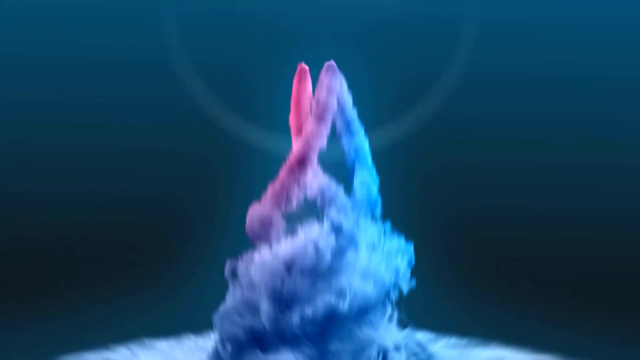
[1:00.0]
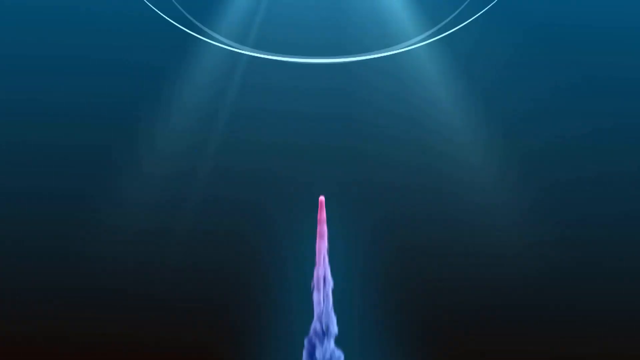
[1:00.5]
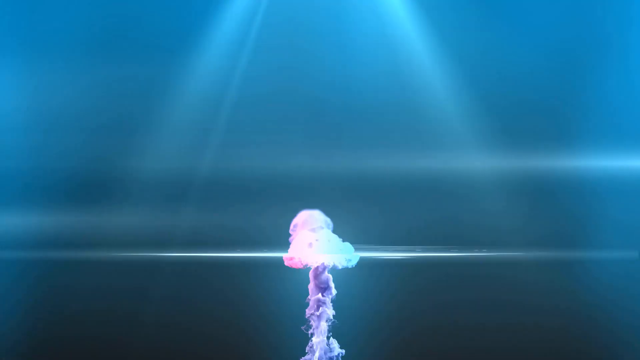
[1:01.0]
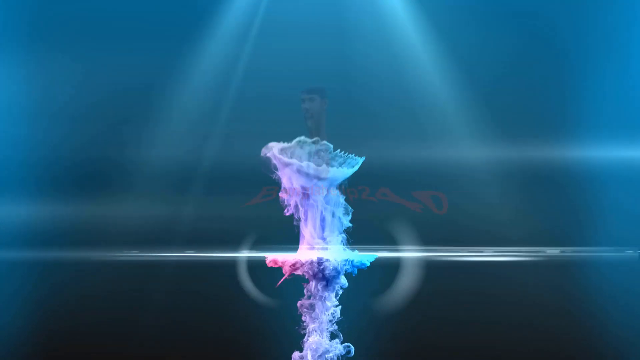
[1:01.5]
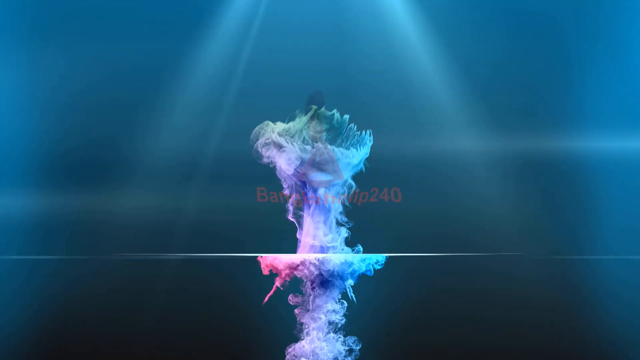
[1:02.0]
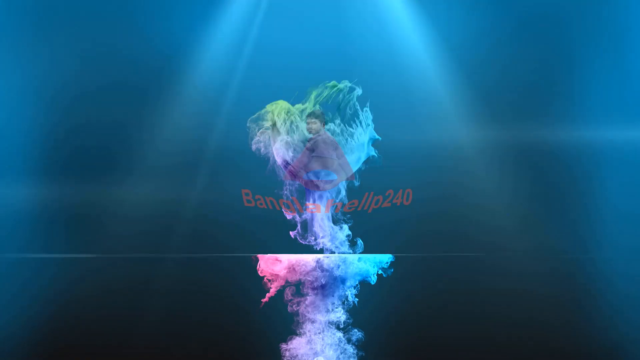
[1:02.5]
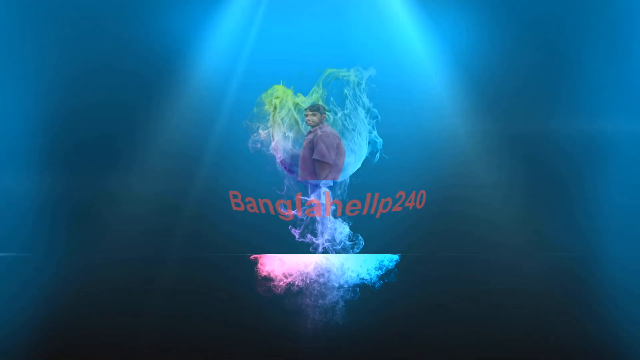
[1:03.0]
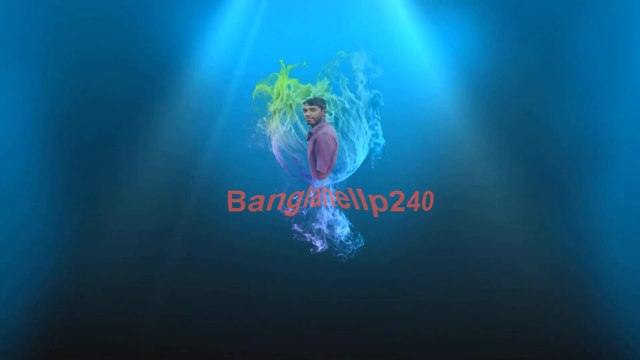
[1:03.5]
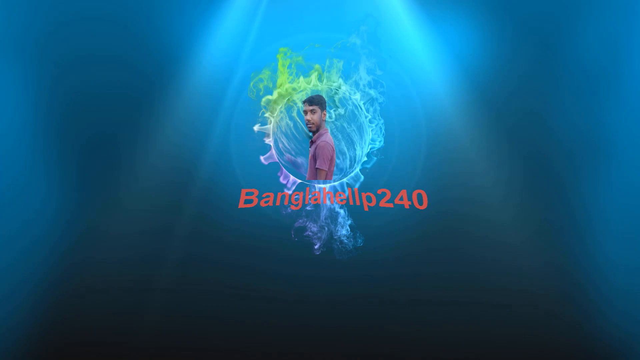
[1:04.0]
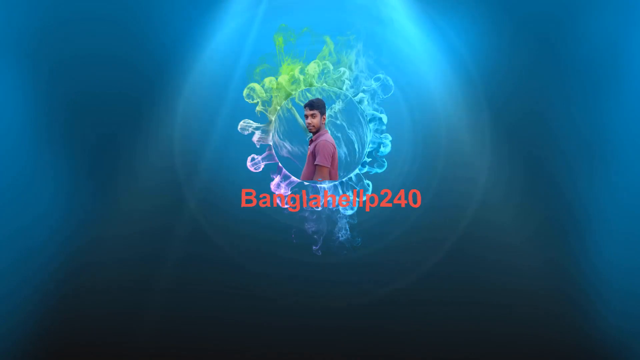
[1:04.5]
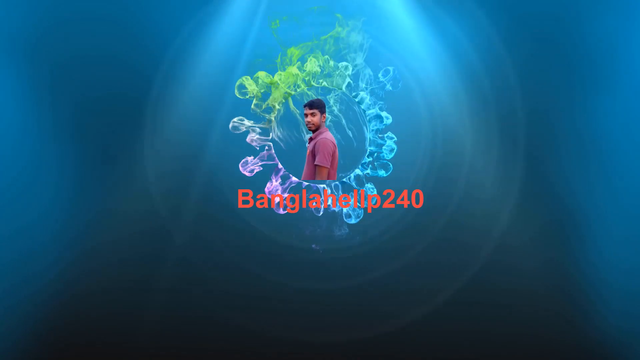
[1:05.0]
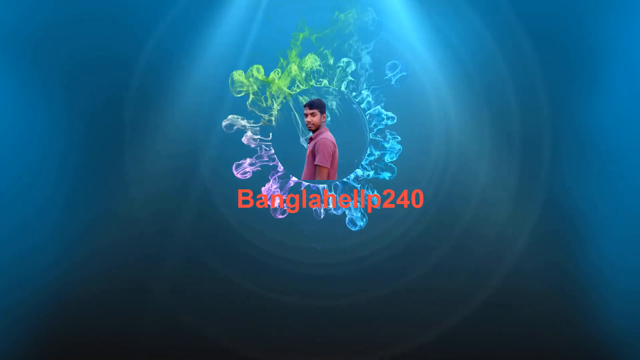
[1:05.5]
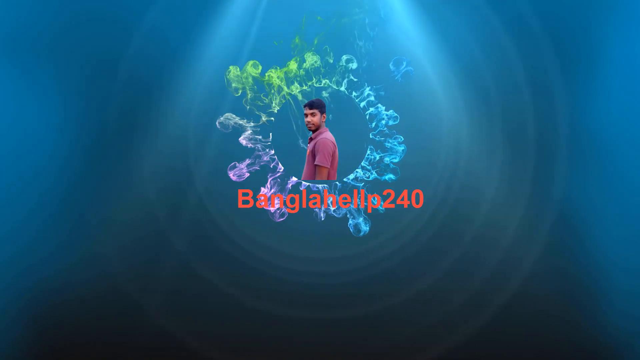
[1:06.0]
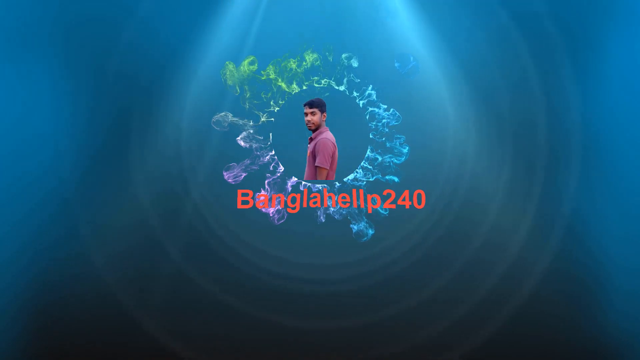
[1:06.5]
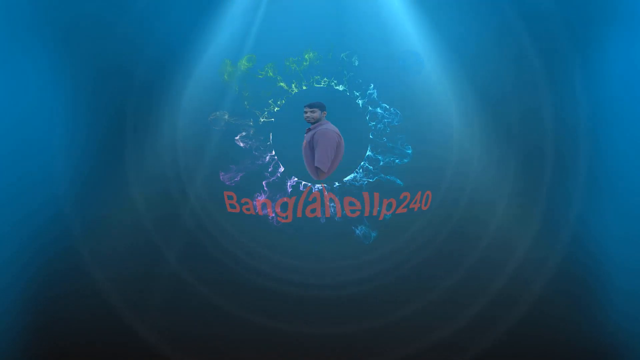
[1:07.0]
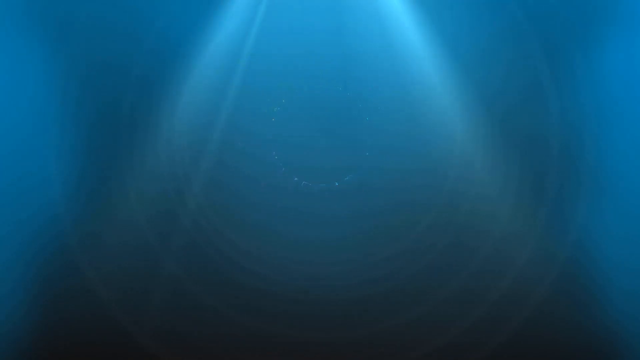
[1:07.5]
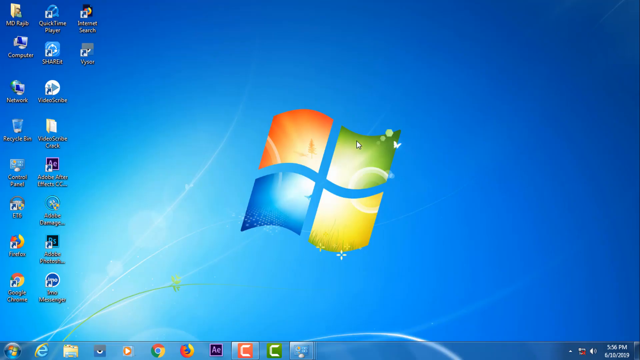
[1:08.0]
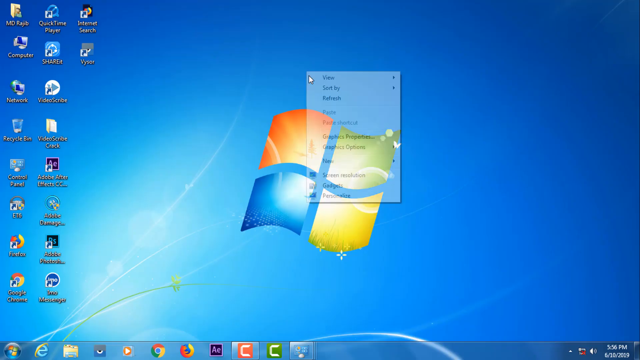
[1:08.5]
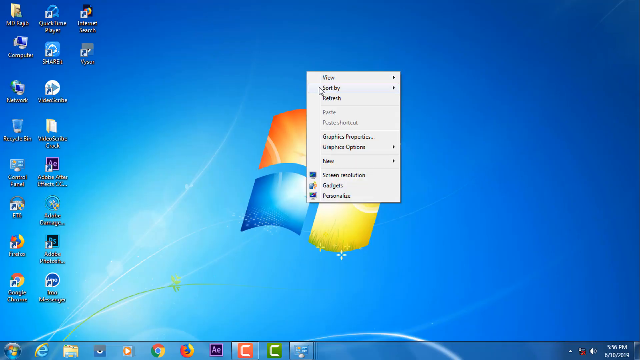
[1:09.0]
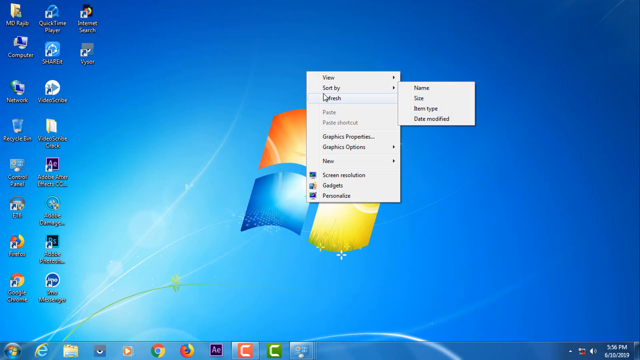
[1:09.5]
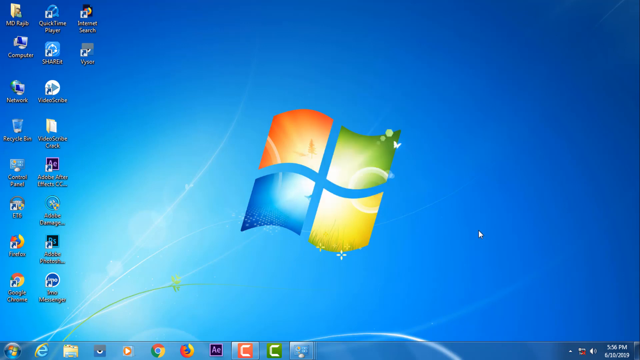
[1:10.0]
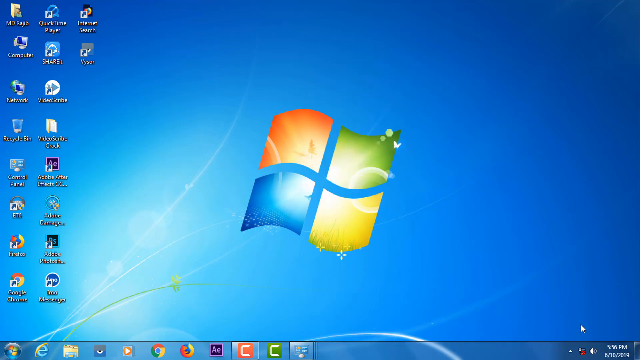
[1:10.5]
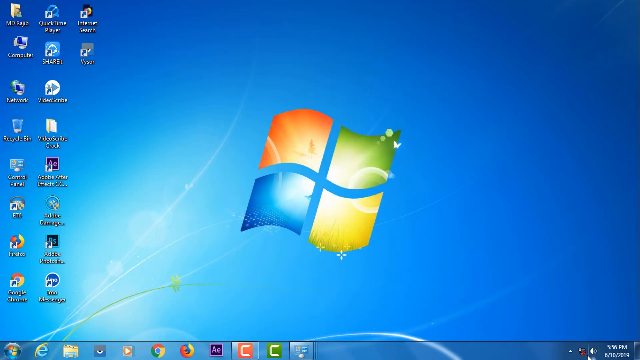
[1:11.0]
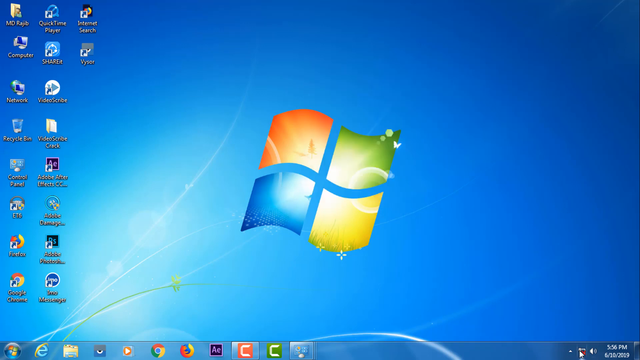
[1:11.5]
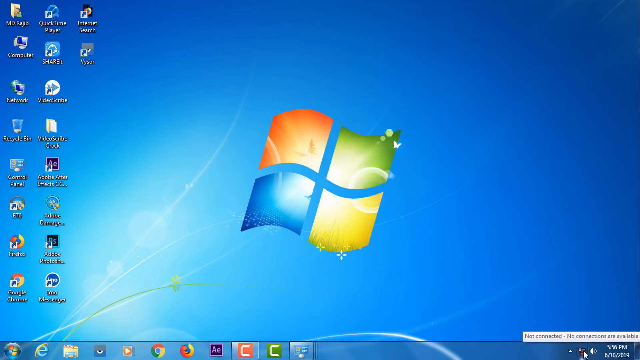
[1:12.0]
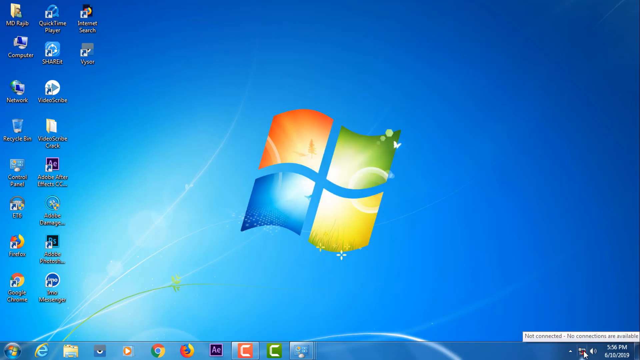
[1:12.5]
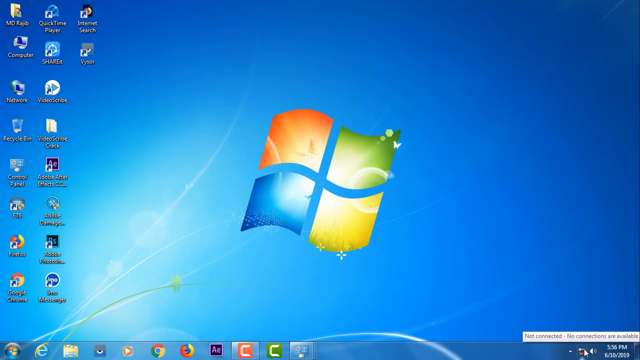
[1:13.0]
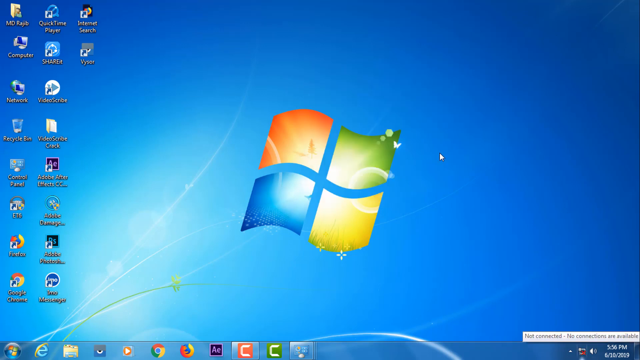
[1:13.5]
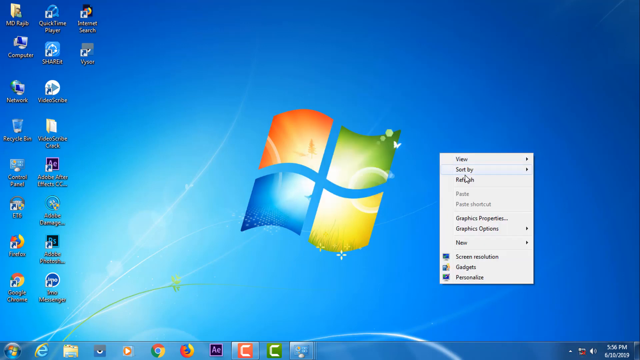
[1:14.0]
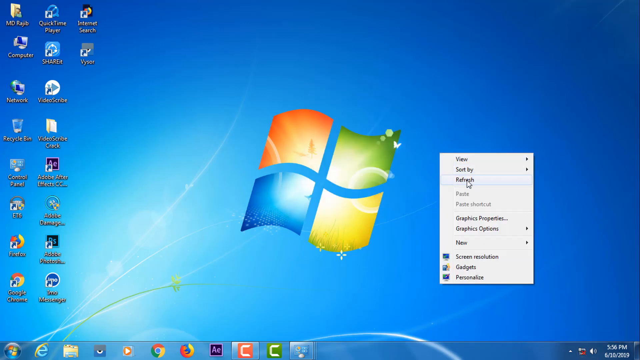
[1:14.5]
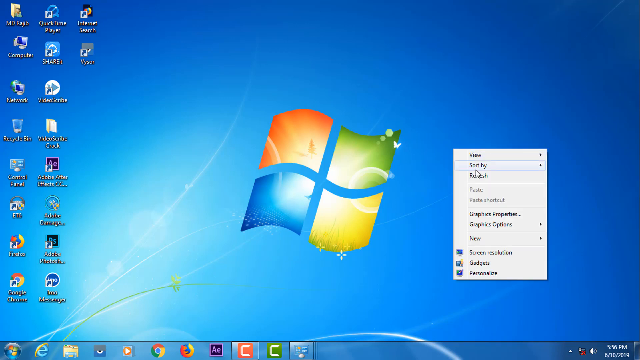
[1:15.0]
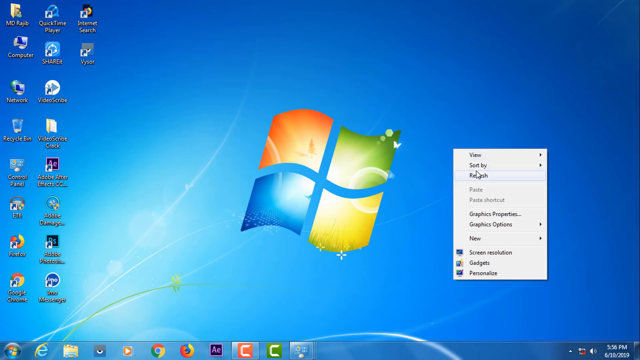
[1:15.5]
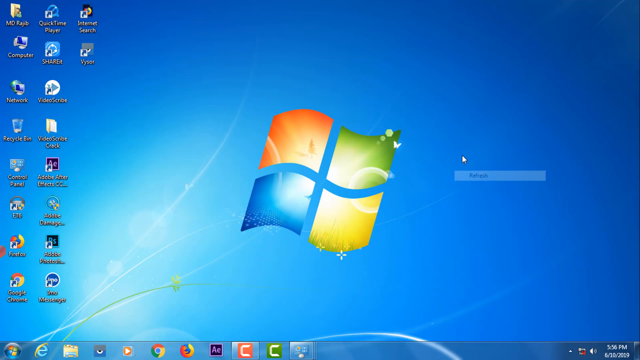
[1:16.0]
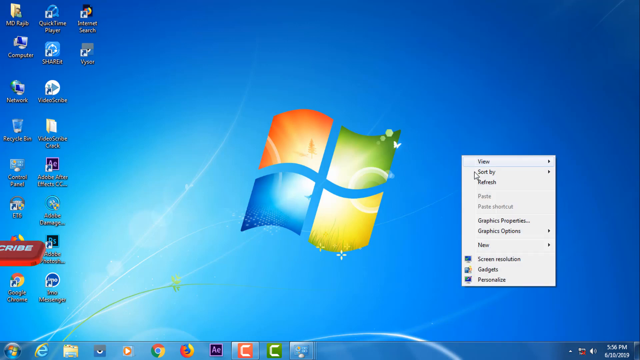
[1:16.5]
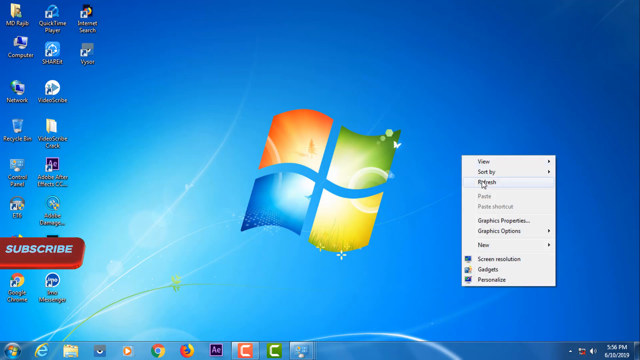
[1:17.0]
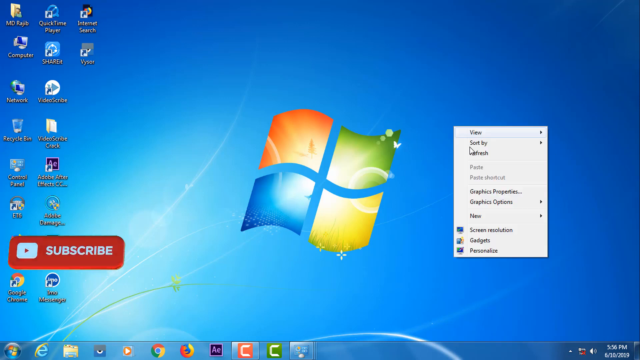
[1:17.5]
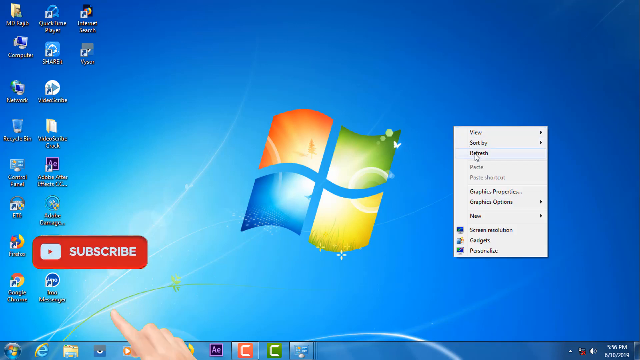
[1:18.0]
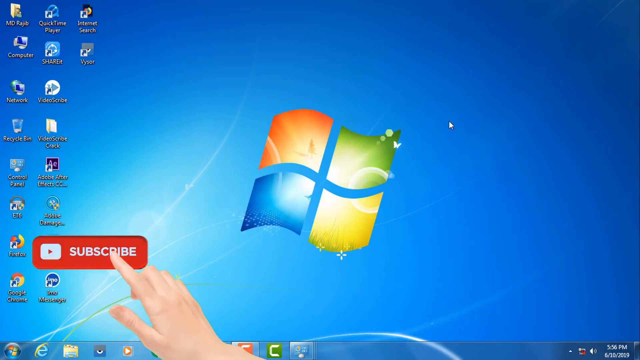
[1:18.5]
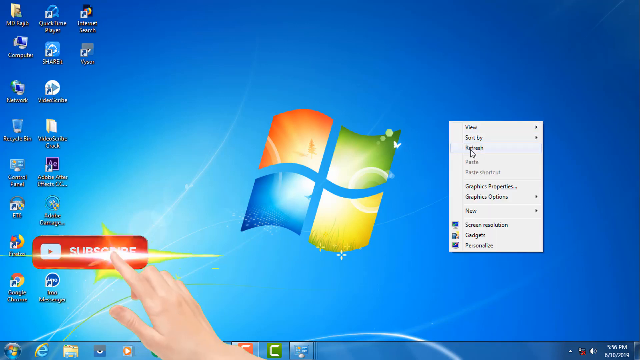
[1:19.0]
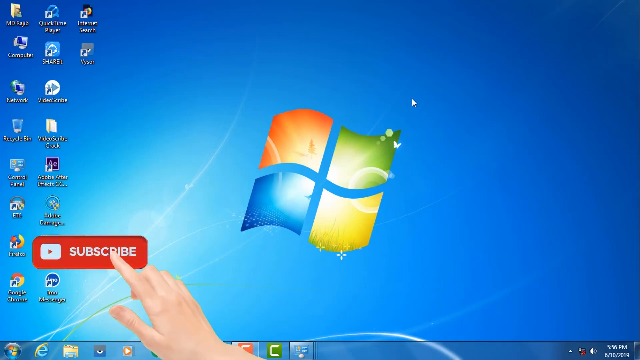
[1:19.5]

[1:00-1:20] Animated water spirals up in blue and pink against a dark blue background. An explosion follows and transforms into a picture of a man in a red polo t-shirt surrounded by a bubble of green, yellow and purple, with red text underneath reading "Bangla Help 240." A transition leads back to the Windows screen, where the user right-clicks and clicks refresh, goes into the bottom corner showing "not connected, no connection available," and then right-clicks and refreshes over and over. A red subscribe button with white and the YouTube logo pops up in the bottom left-hand corner, and an animated right hand reaches up, clicks the button, dips down out of view and disappears as the subscribe button moves off the screen to the left. The user right-clicks and refreshes several more times.